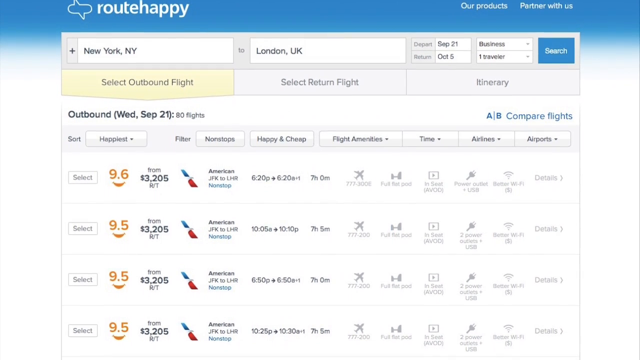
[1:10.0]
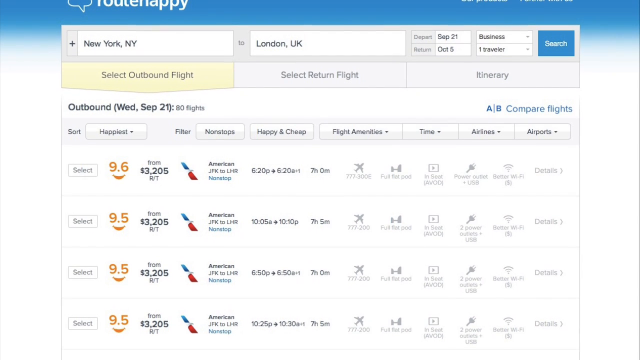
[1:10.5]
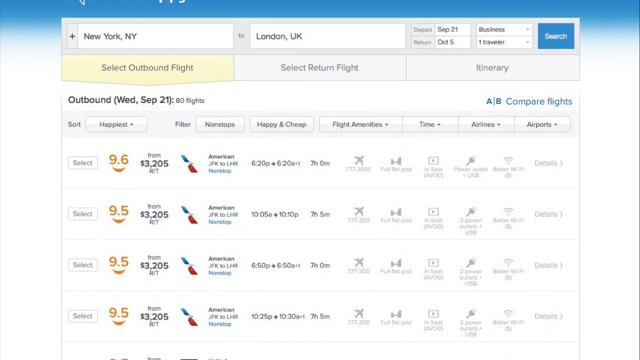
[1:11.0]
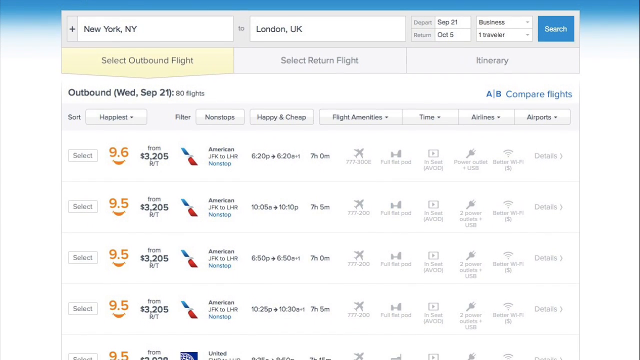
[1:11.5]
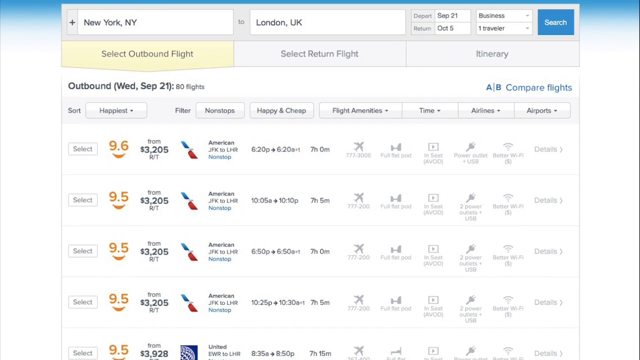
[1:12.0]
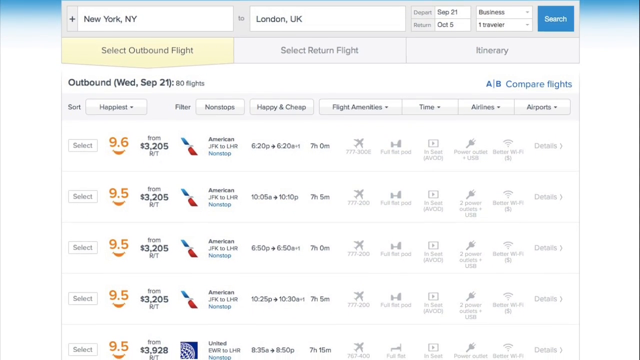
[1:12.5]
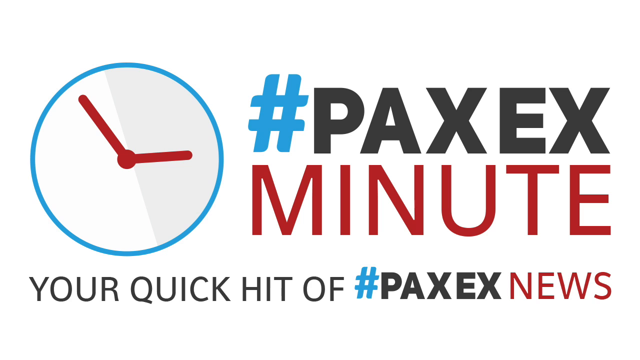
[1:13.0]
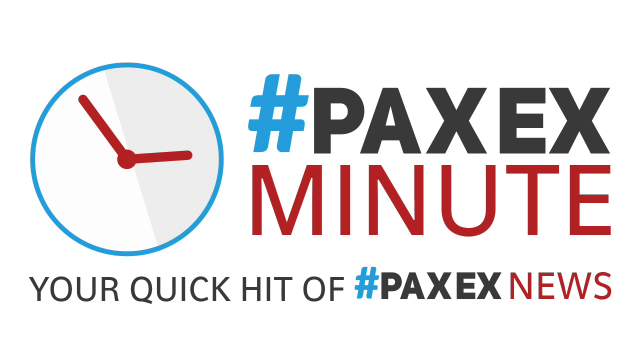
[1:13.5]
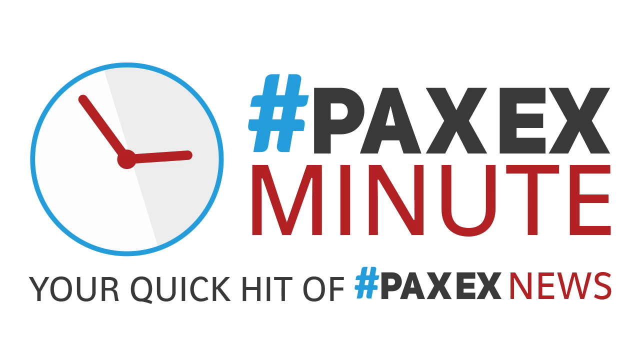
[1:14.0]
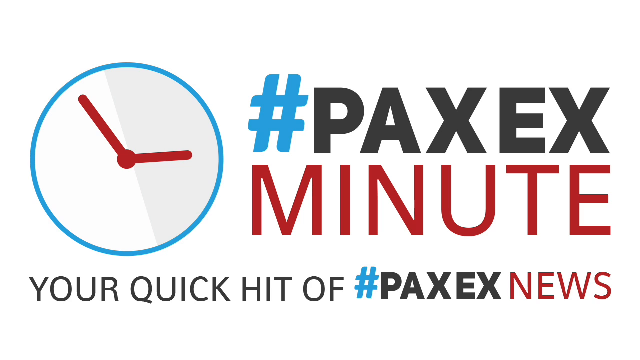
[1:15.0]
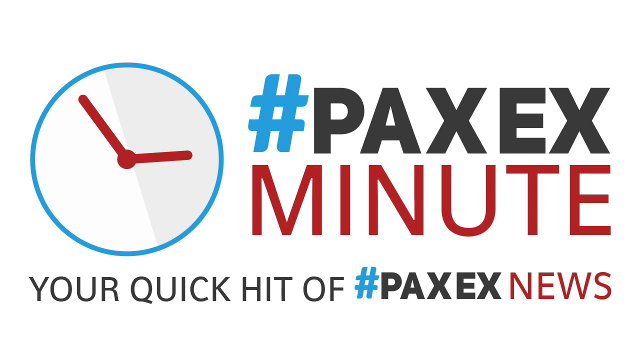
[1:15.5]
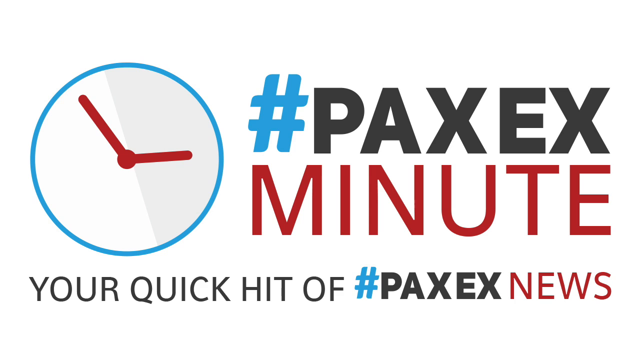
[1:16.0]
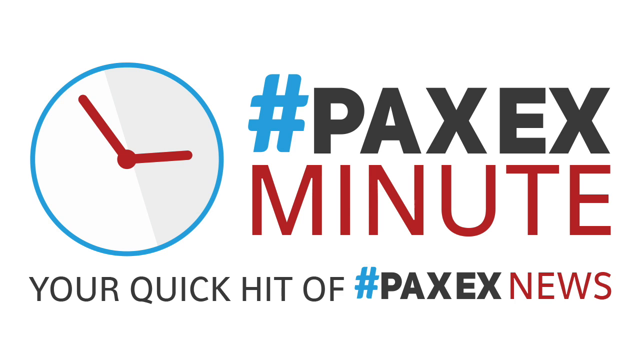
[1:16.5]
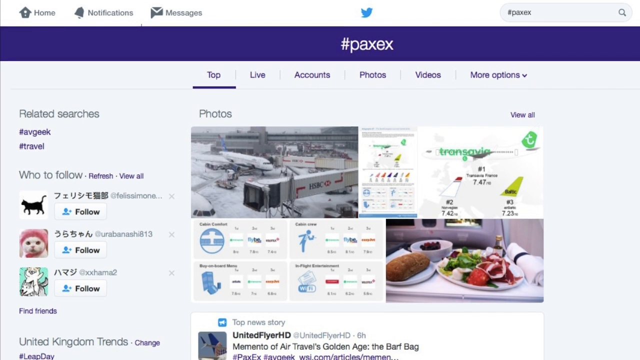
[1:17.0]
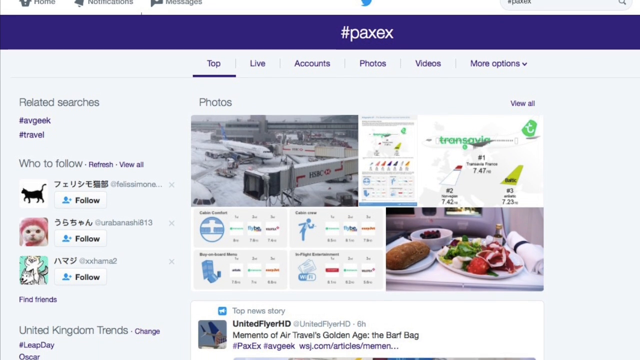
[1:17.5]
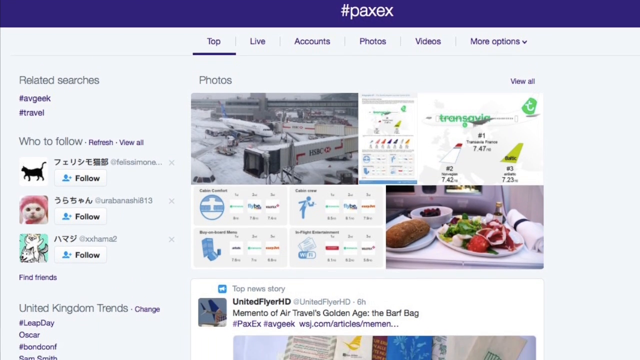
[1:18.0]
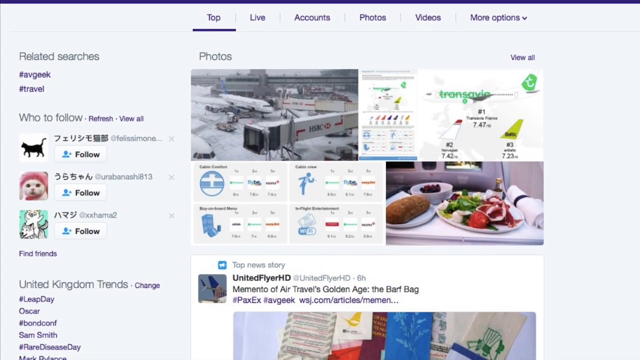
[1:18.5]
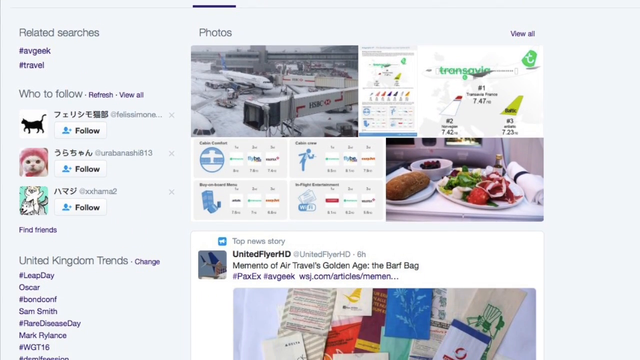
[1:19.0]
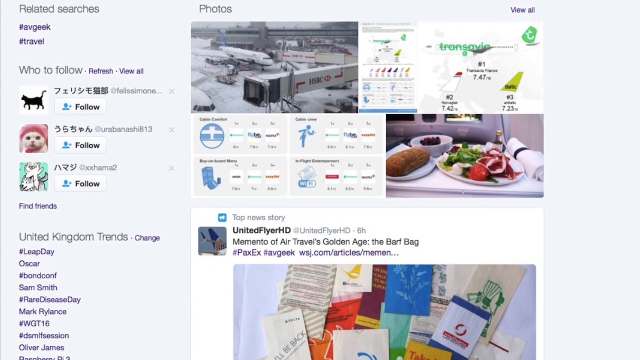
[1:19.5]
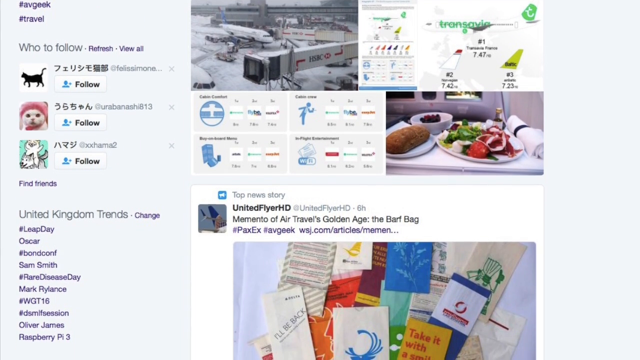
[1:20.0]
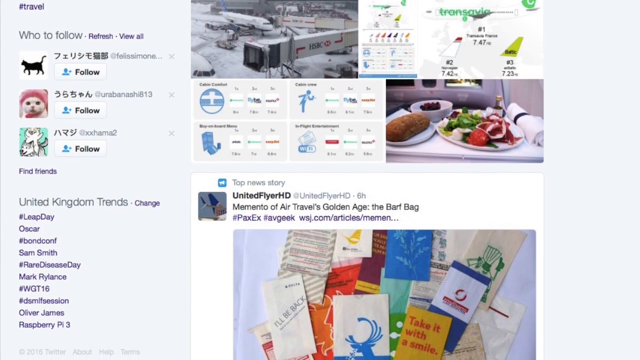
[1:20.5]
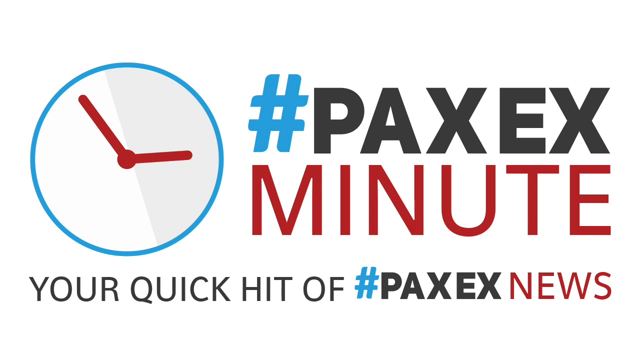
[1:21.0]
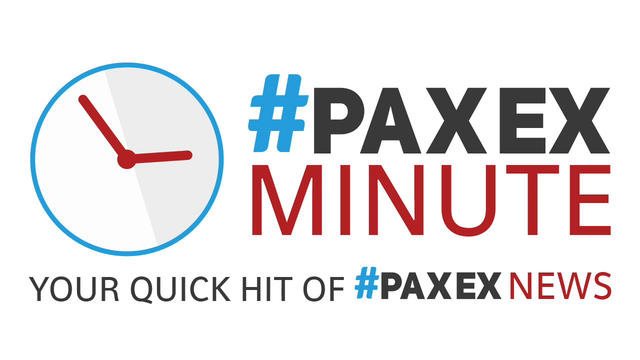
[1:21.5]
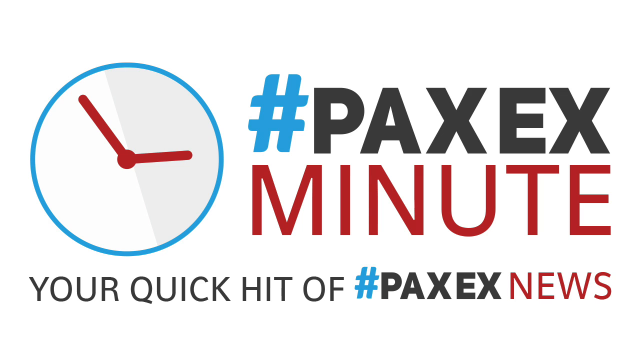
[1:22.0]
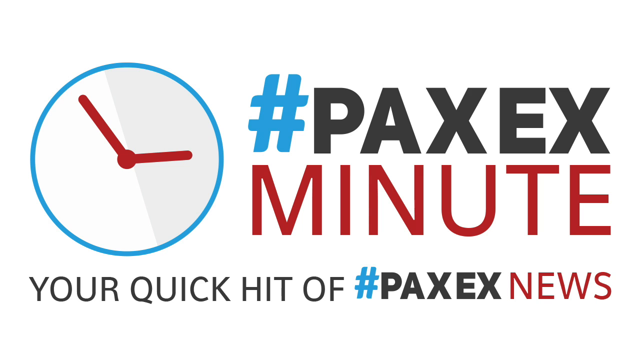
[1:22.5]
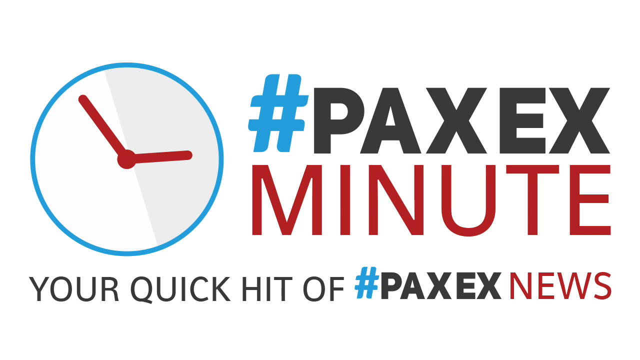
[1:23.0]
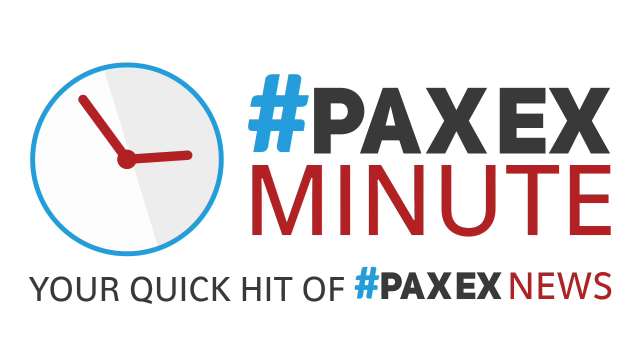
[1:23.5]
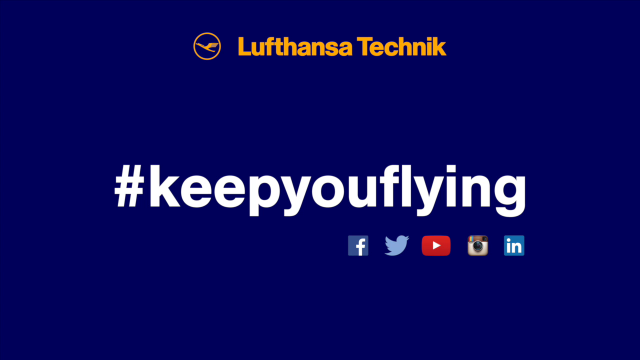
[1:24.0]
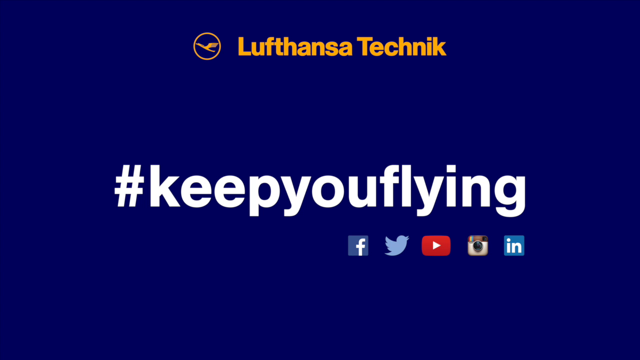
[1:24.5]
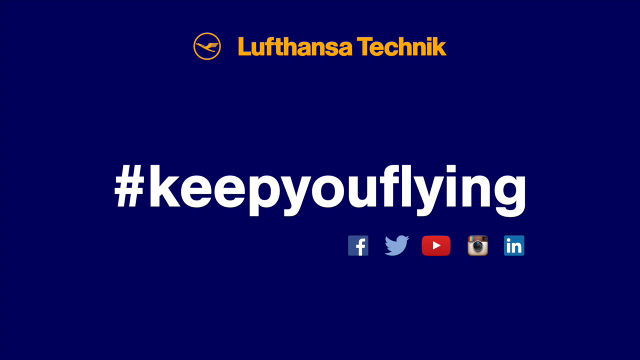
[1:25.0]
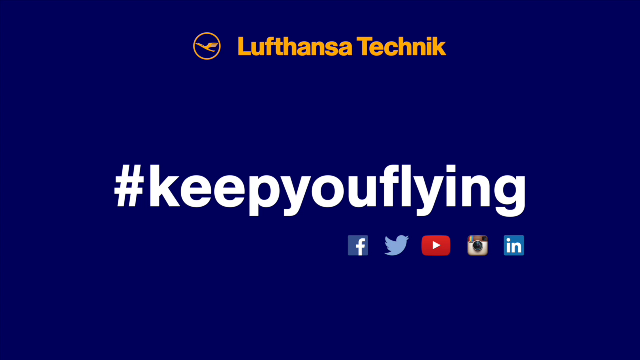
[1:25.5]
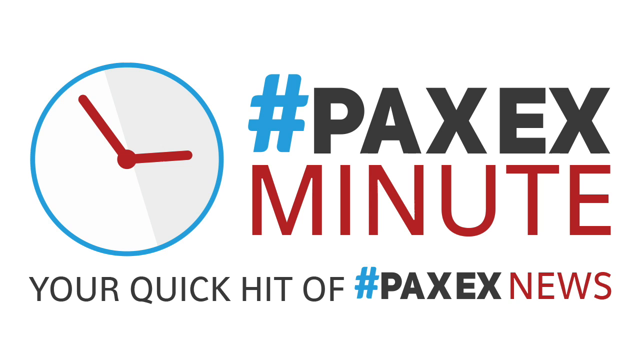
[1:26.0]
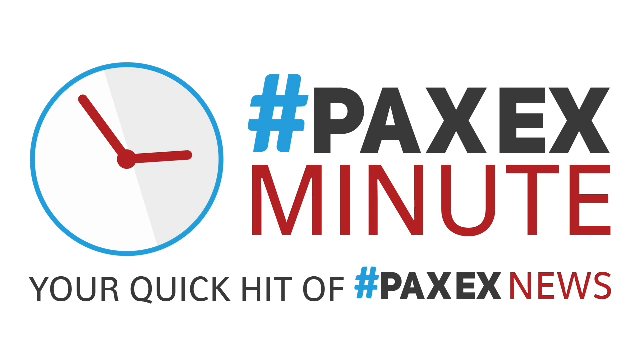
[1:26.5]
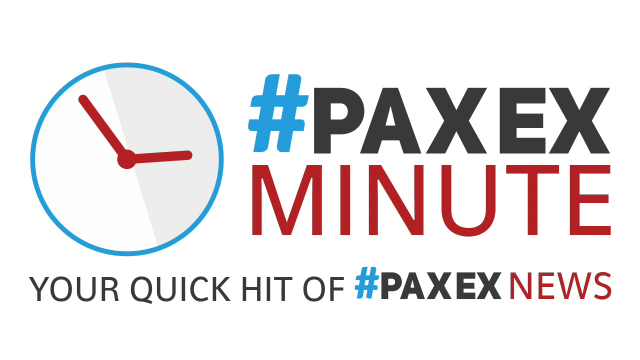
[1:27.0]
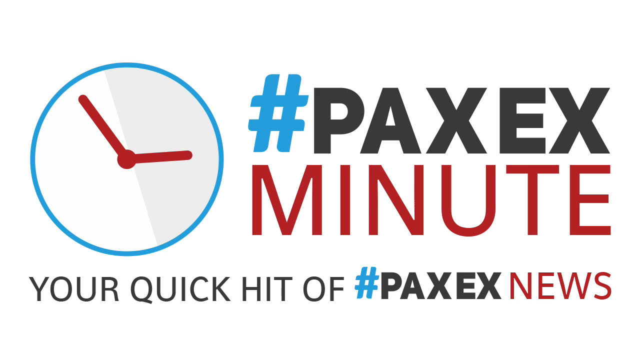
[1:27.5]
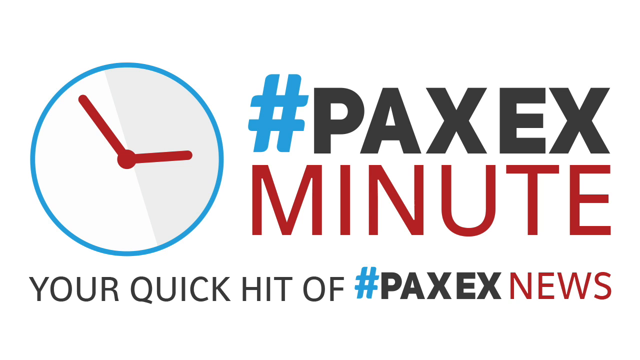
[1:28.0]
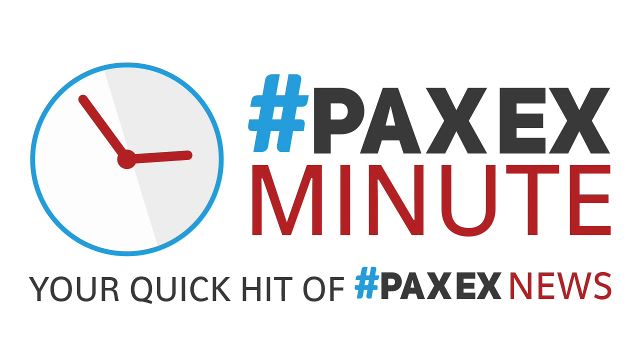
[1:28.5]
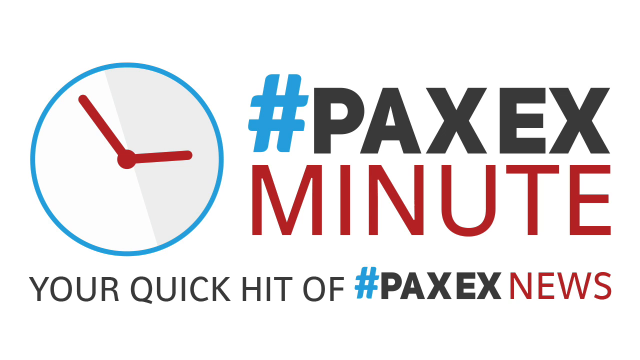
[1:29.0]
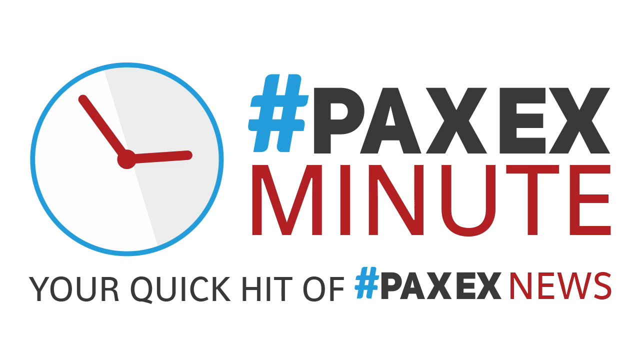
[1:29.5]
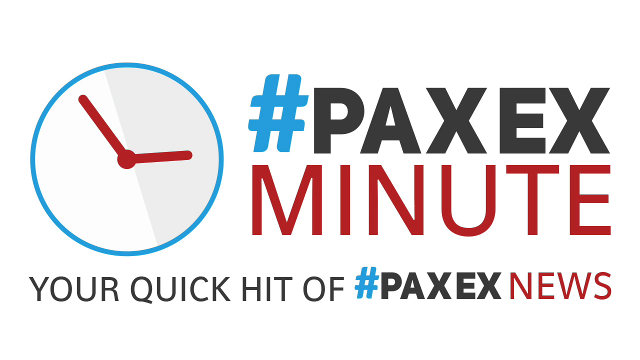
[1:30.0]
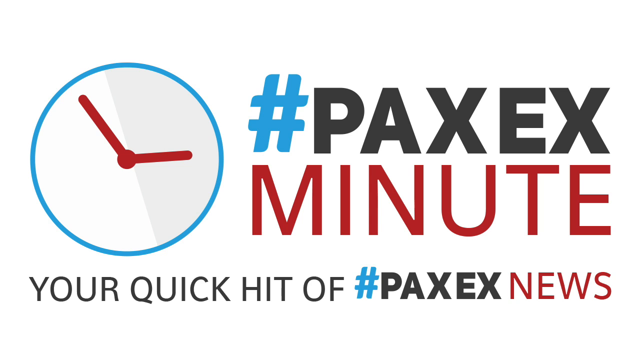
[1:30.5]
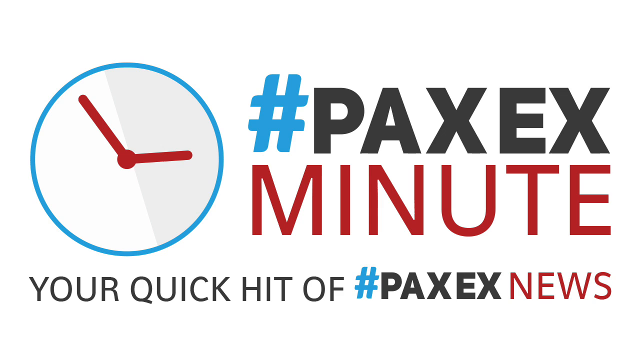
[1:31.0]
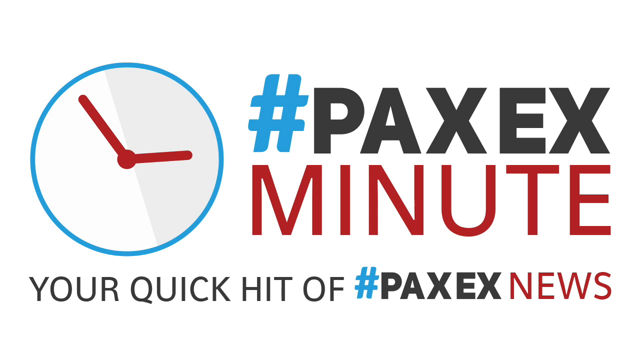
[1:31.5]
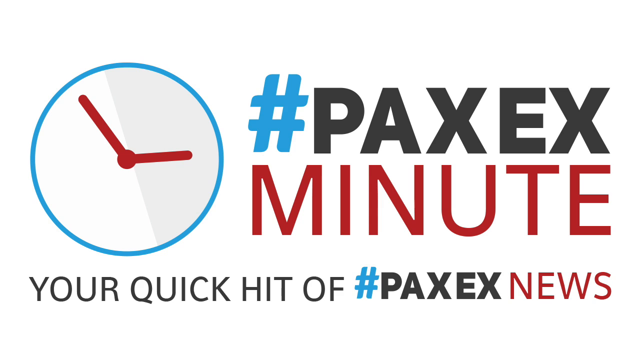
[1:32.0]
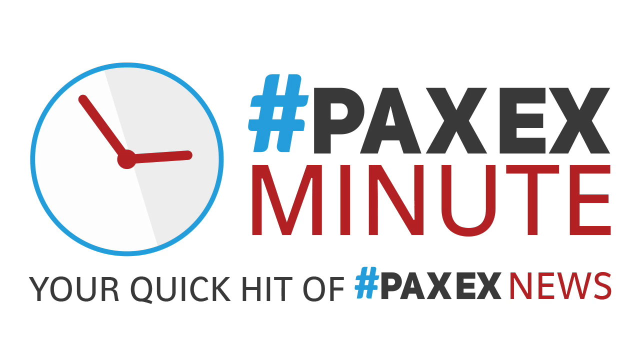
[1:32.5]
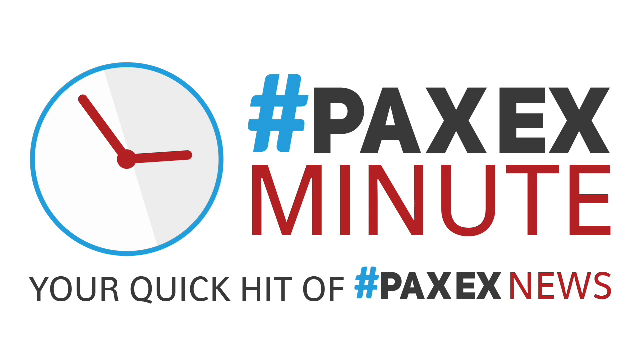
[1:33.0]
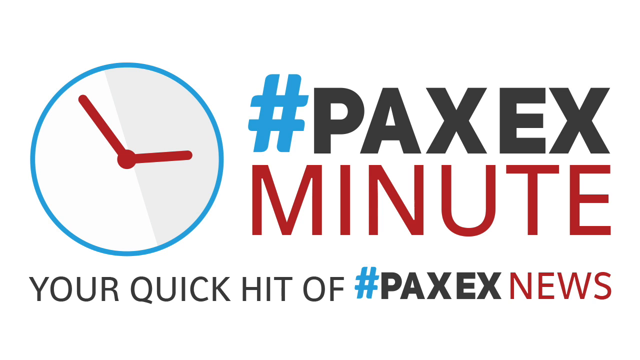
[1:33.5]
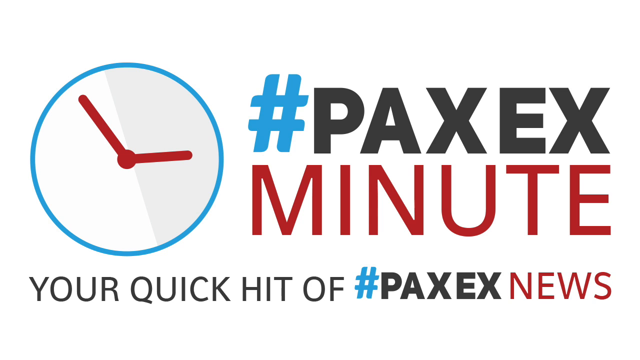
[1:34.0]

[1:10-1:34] The scrolling continues down the website showing the available flights until the screen cuts to a white background with a blue and red clock on the left side and the text "#PaxEx minute, your quick hit of PaxEx news". Another website follows, Twitter, with "#PaxEx" in the search bar and the search results shown. The user scrolls down very slowly through similar results, and then the screen goes back to the #PaxEx minute white background with the clock. The screen then changes to the dark blue screen that says "#keep you flying" and then back to the clock screen, where it remains until the end.